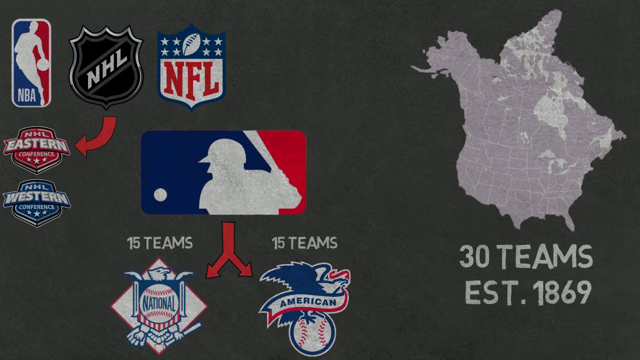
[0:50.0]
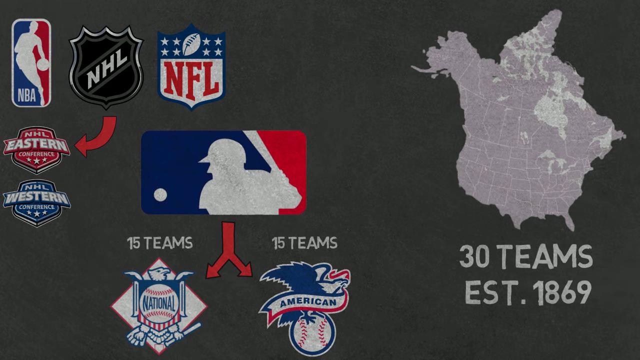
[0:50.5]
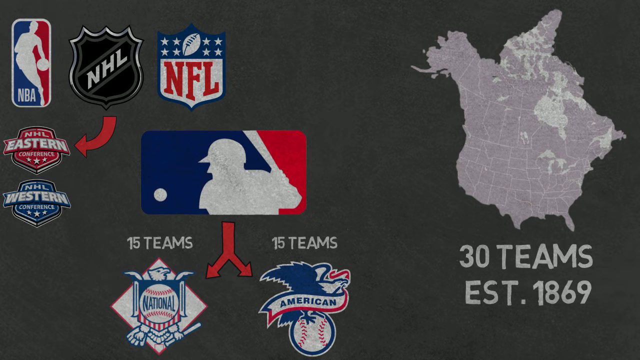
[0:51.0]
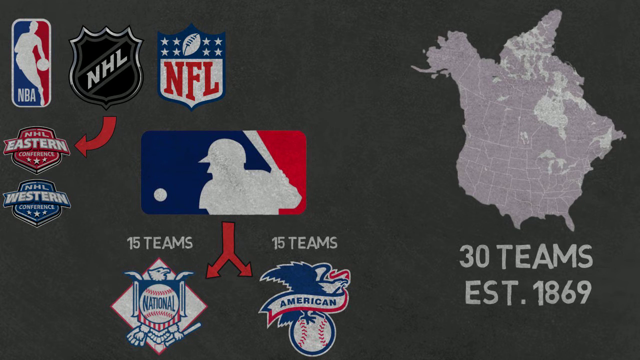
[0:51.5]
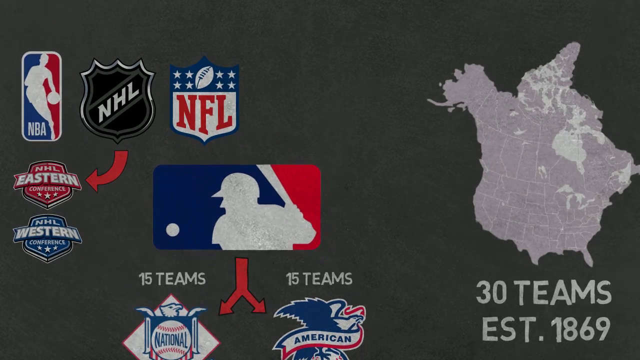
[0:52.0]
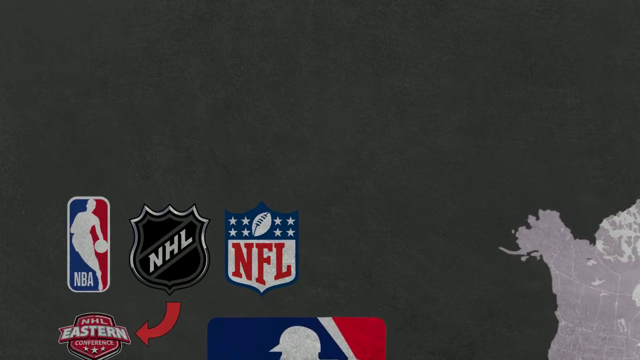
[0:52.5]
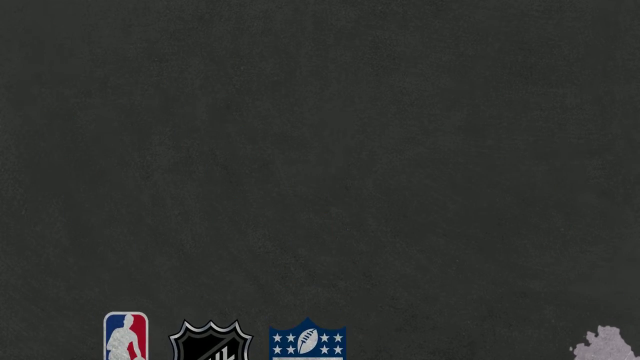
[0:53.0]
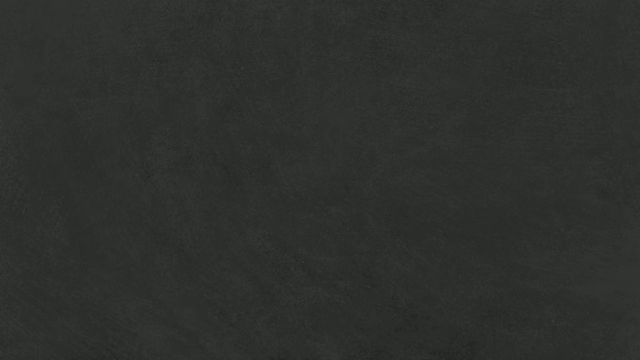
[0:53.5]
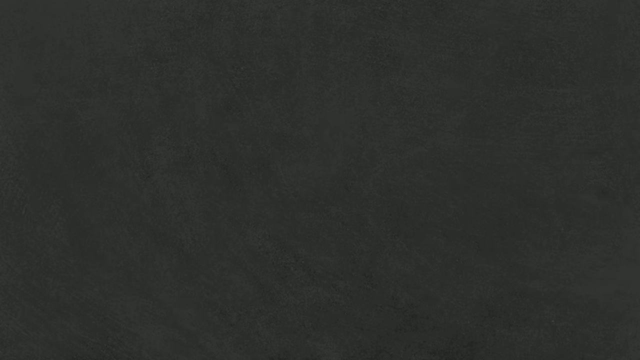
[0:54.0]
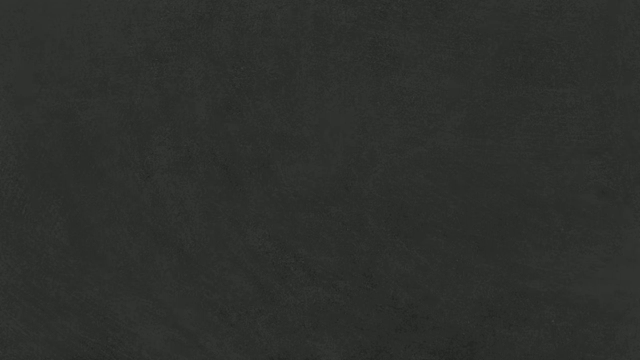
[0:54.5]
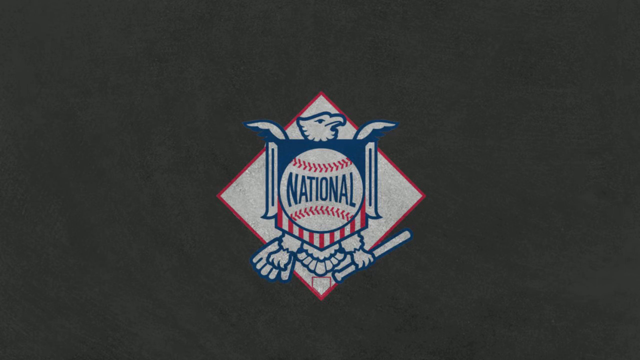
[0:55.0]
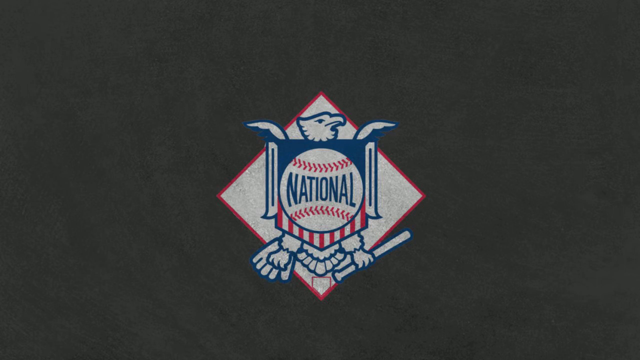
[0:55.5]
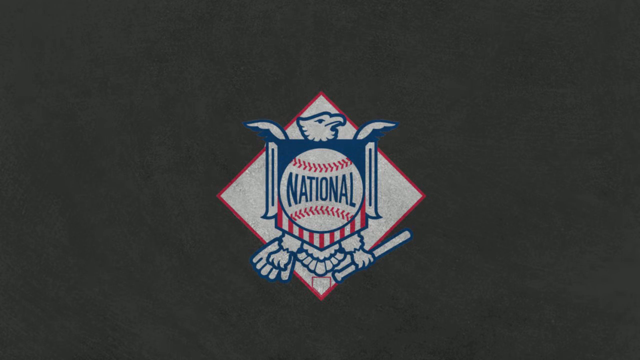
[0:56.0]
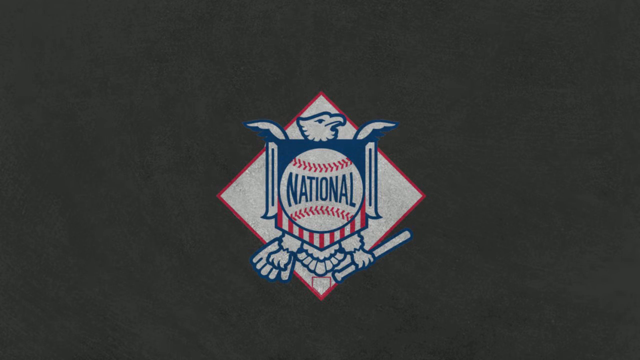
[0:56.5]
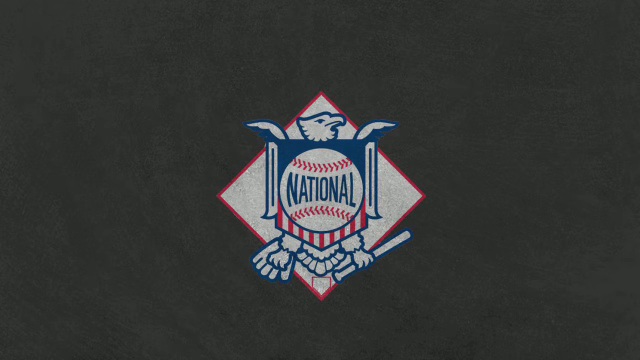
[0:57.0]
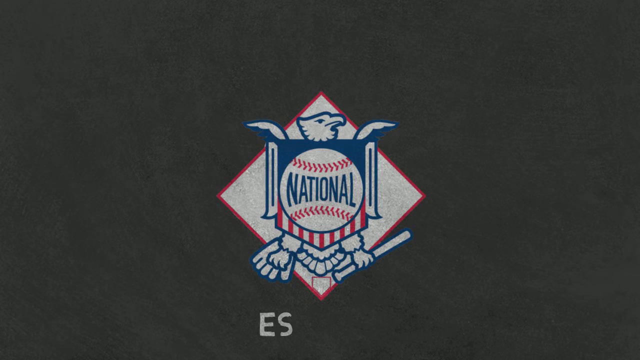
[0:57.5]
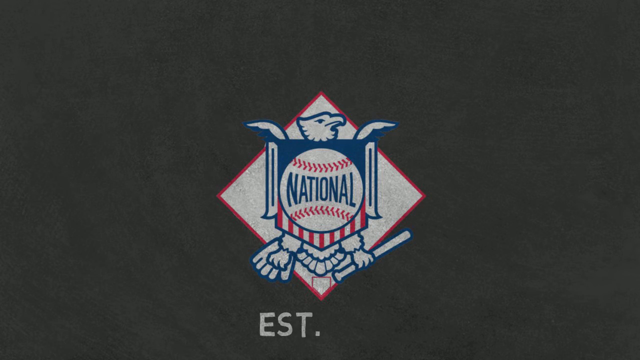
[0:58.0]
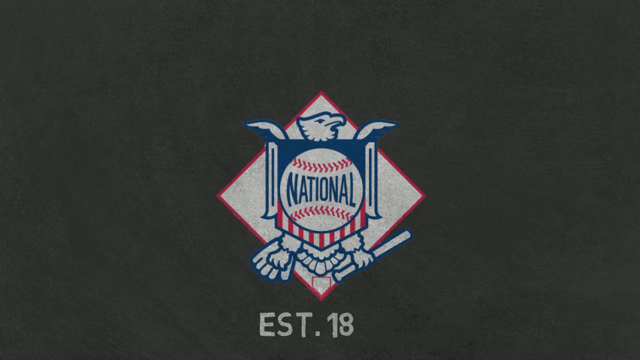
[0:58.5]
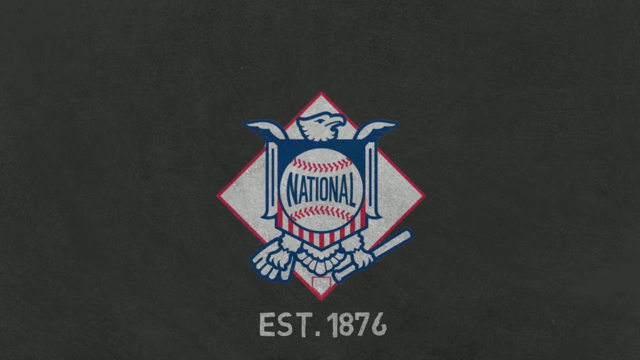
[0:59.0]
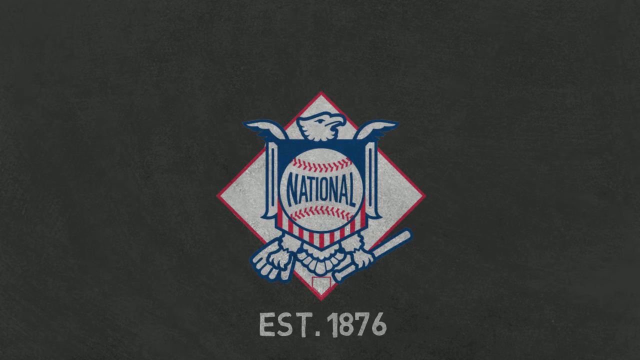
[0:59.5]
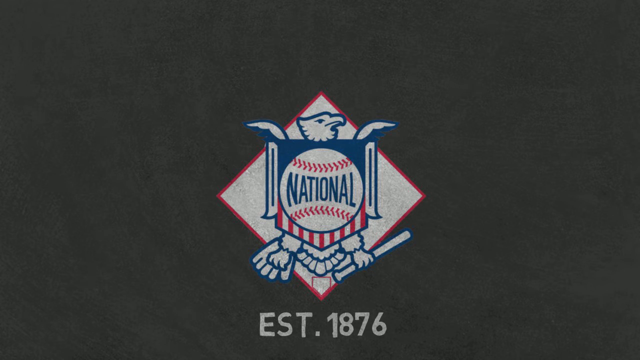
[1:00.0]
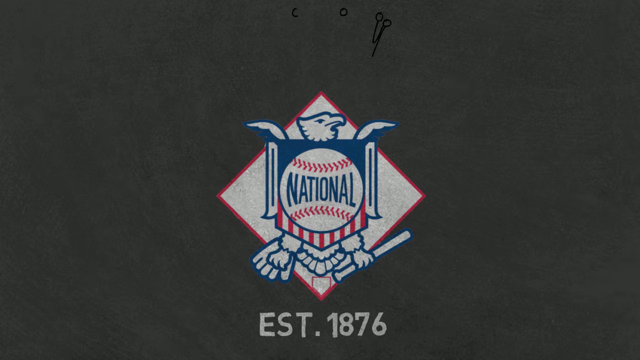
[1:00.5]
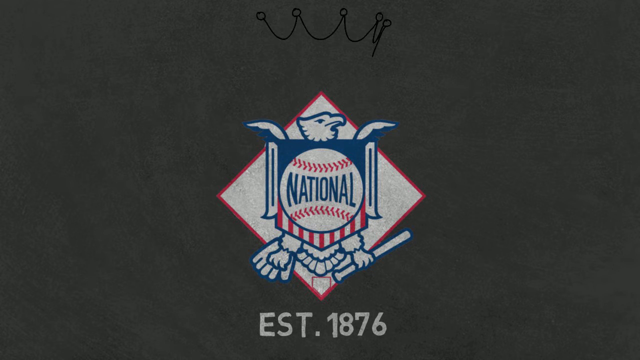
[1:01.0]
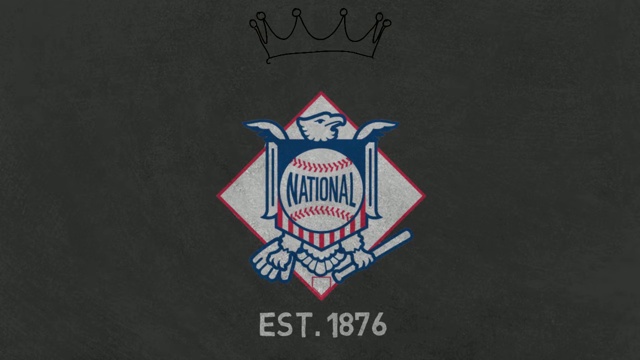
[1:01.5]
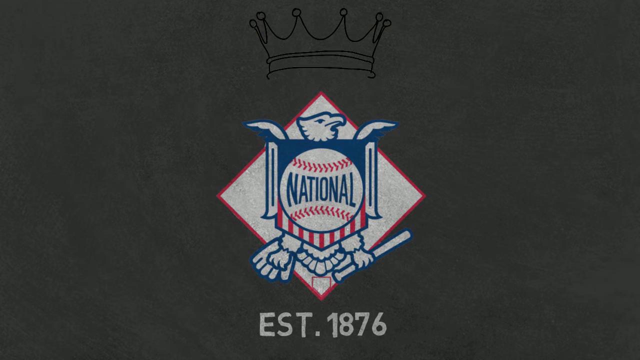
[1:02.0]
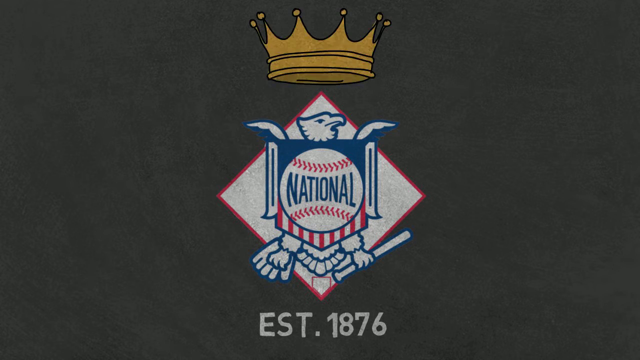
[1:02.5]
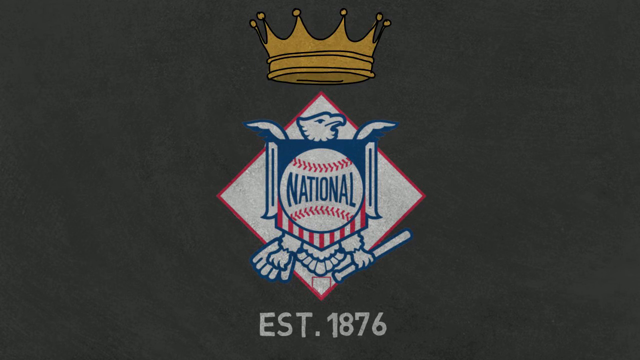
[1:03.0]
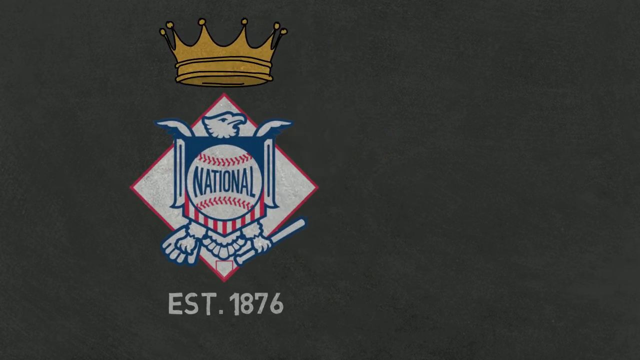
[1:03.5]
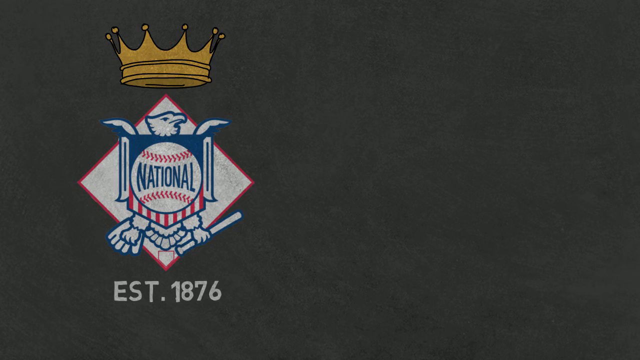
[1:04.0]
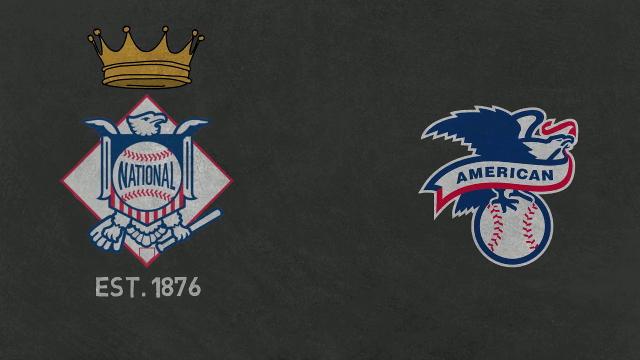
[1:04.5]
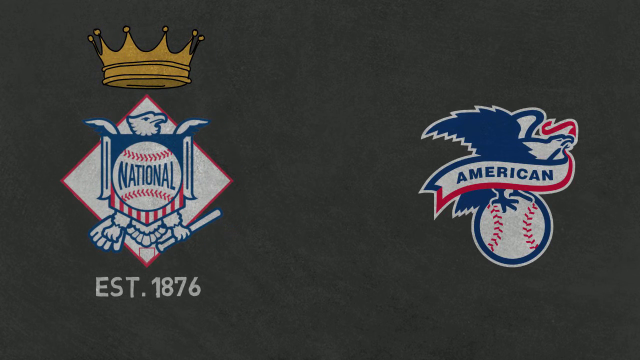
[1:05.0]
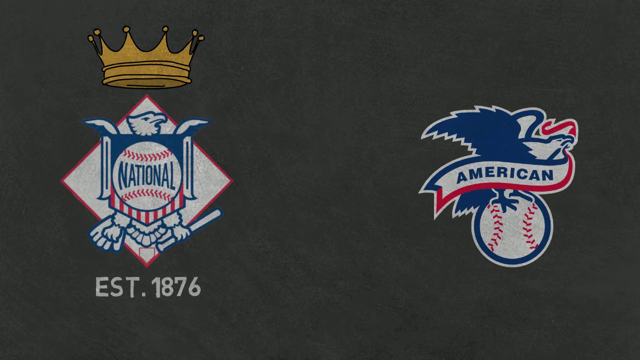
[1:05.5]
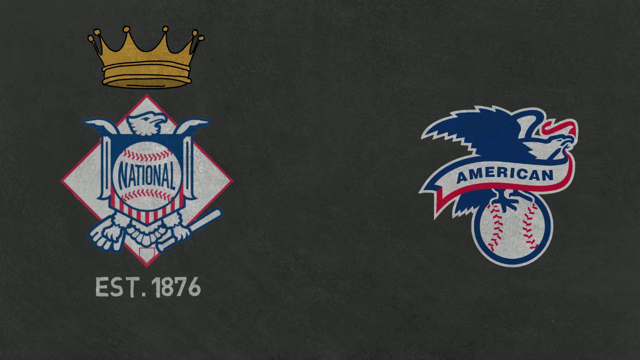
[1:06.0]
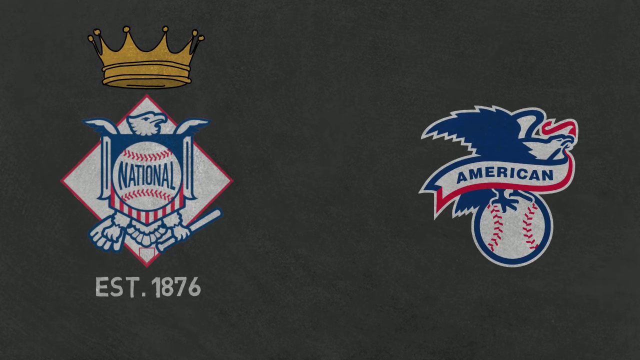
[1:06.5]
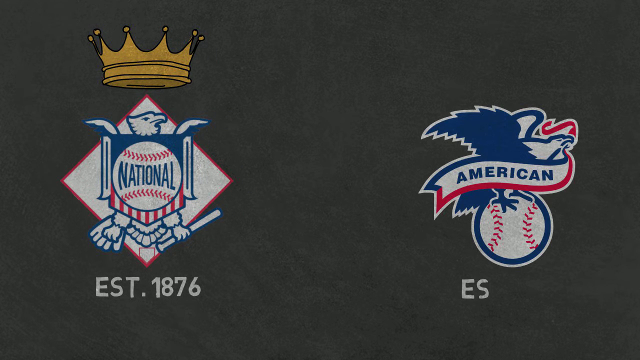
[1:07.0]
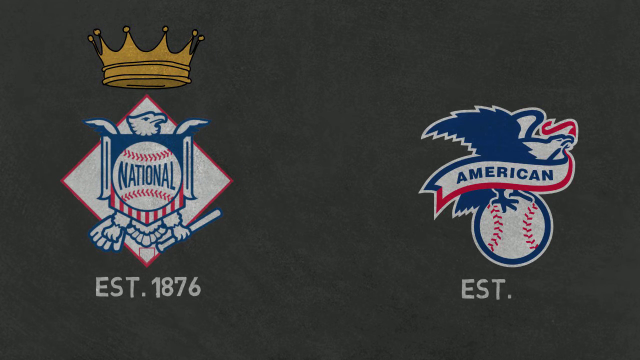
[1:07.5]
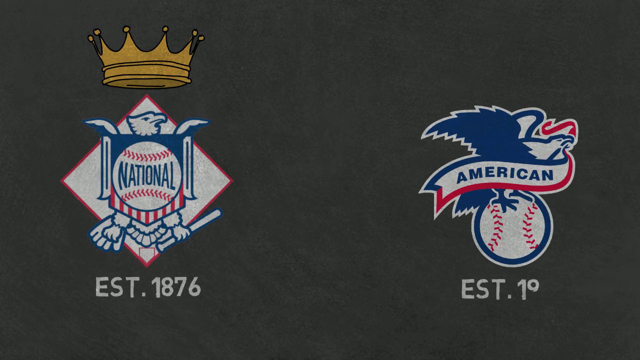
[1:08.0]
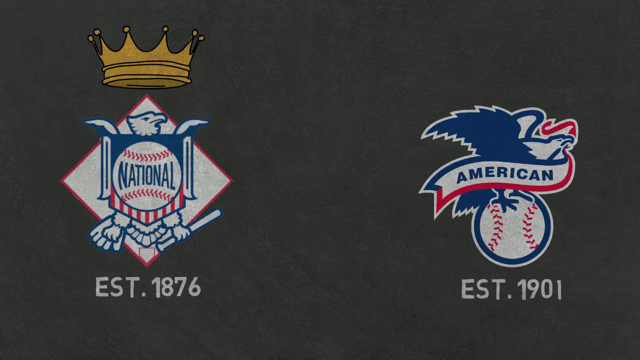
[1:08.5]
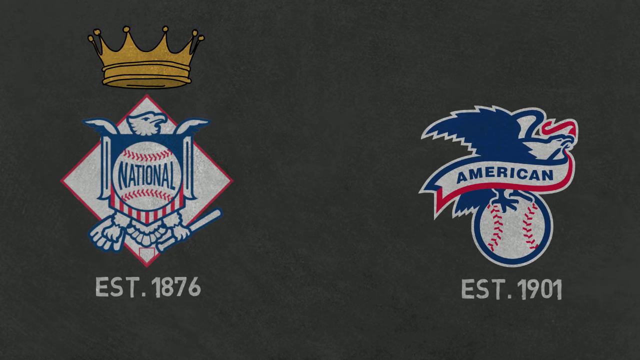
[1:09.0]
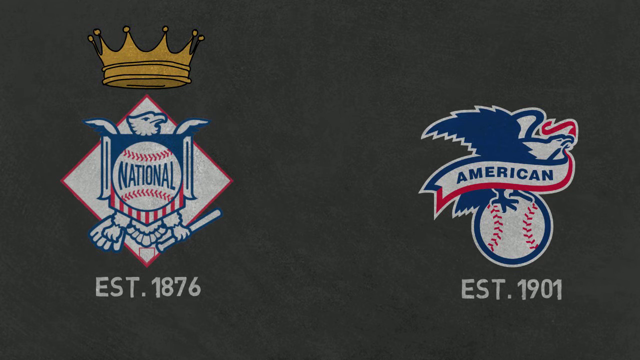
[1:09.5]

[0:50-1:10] The view pans upward from the drawings to the National section of the MLB, where text in white chalky writing reads "established 1876". A yellow crown is drawn on top of this logo. The National logo shows an eagle facing either left or right, holding a baseball bat in its left claw, with a baseball in the center that says "National". The view zooms out and the American logo is drawn, then pans over to the right side where it is, with "established 1901". It shows an eagle facing right, holding a banner in its mouth with its beak in the middle of the banner, on a baseball that says "American", with a red ribbon on the other side of the banner. The American logo has no crown, unlike the National one.